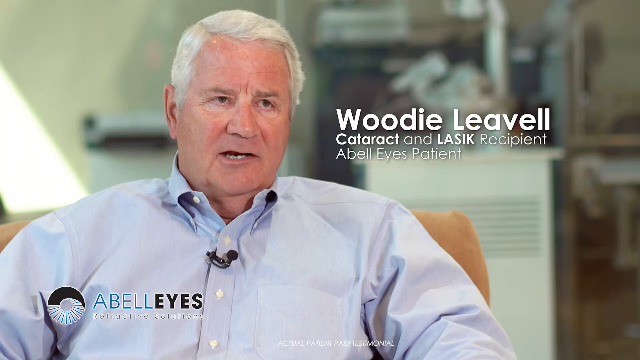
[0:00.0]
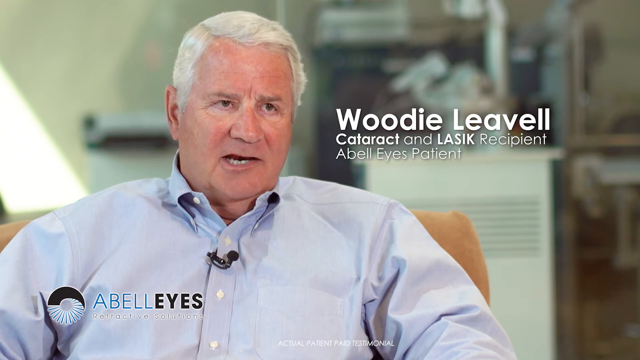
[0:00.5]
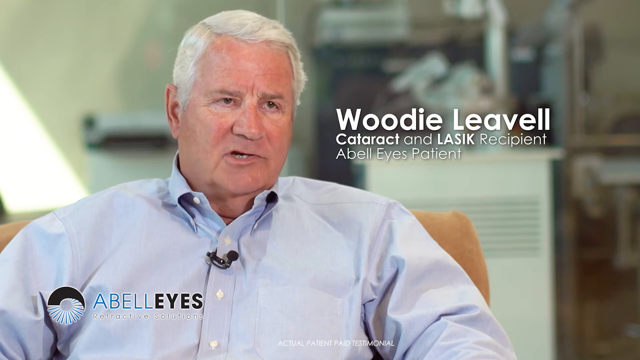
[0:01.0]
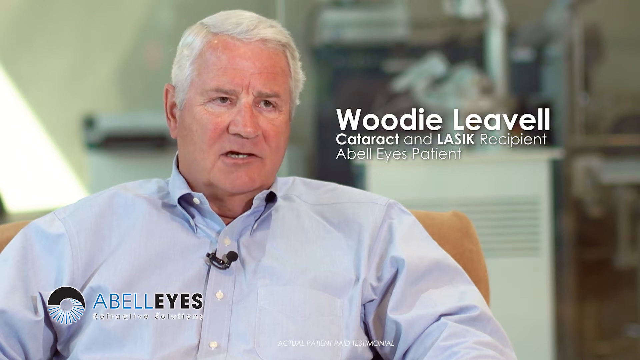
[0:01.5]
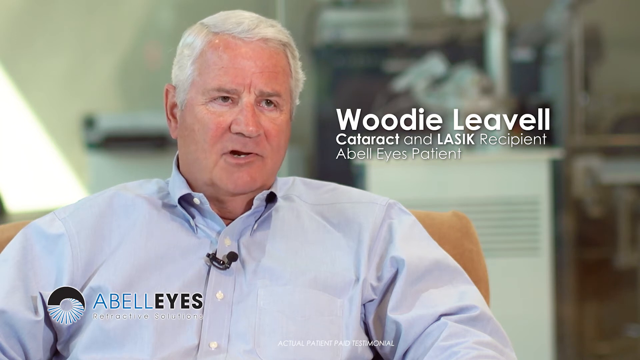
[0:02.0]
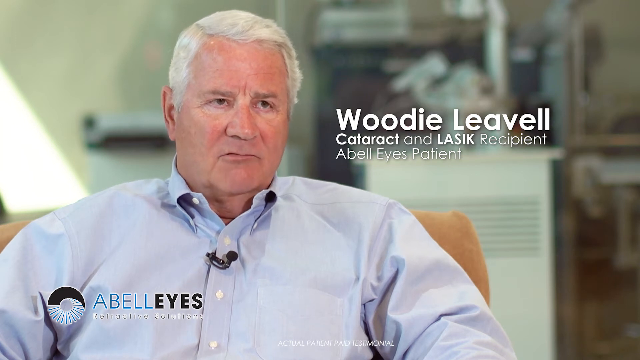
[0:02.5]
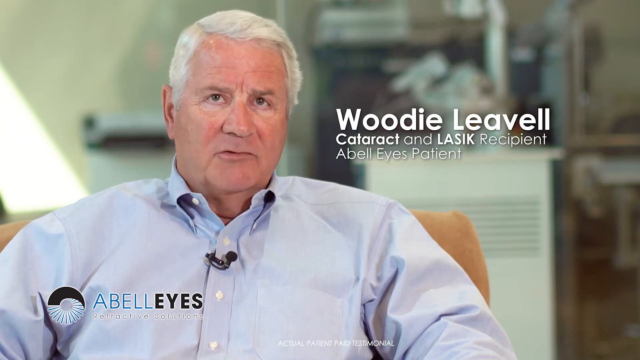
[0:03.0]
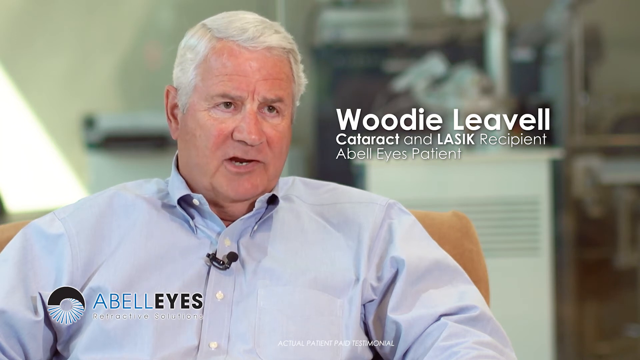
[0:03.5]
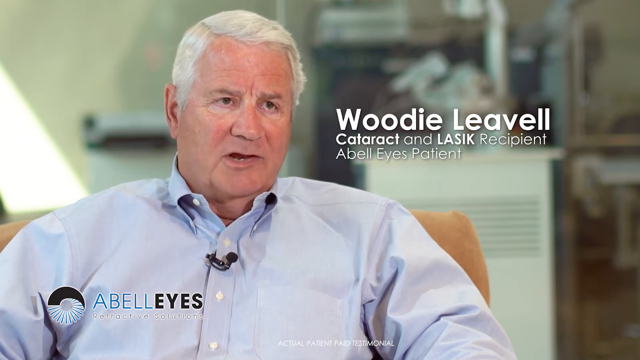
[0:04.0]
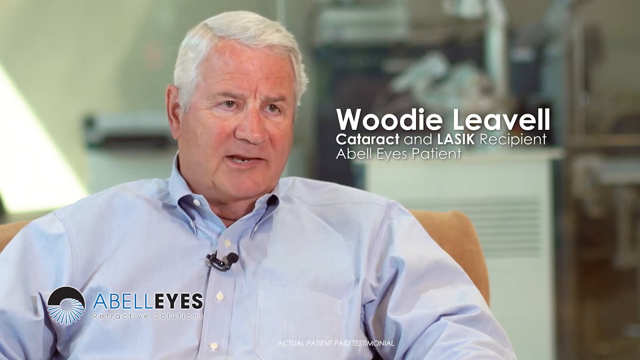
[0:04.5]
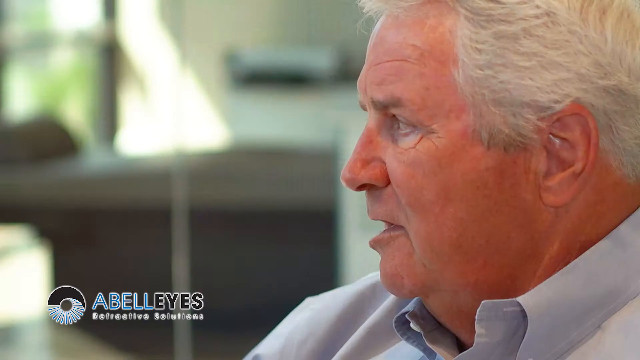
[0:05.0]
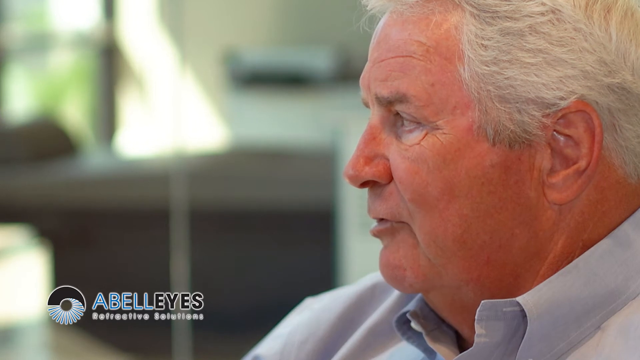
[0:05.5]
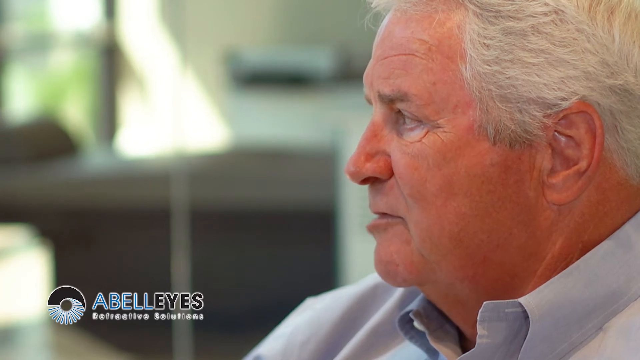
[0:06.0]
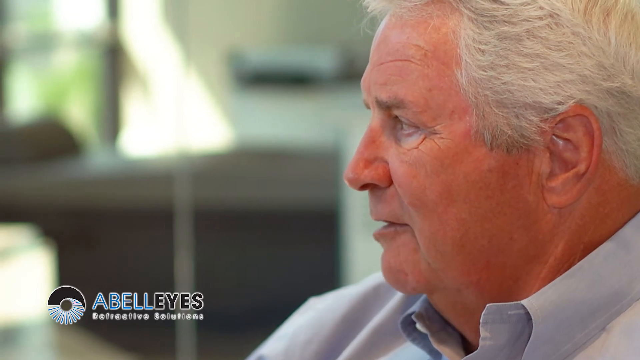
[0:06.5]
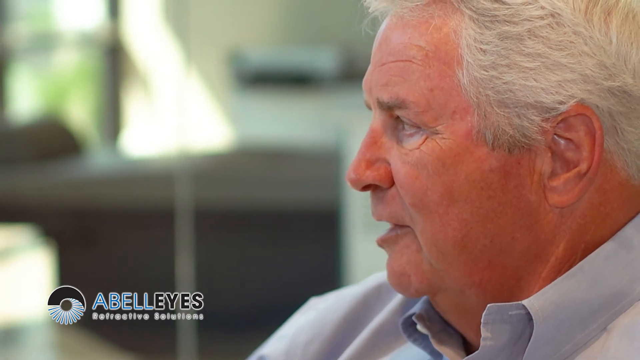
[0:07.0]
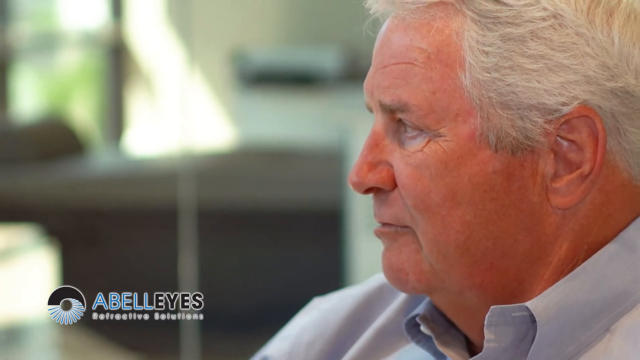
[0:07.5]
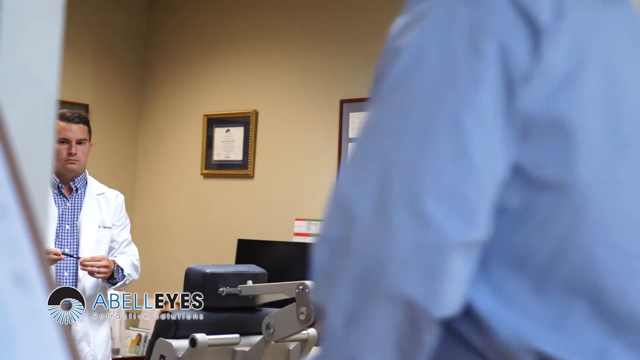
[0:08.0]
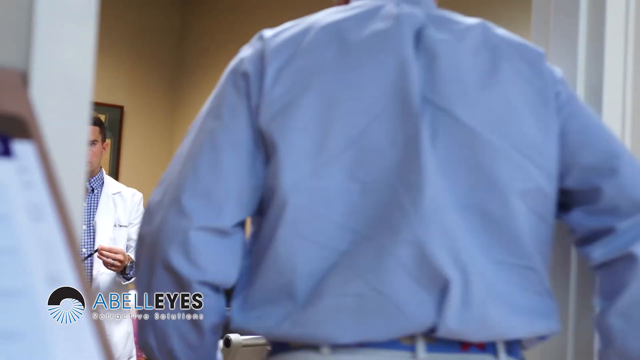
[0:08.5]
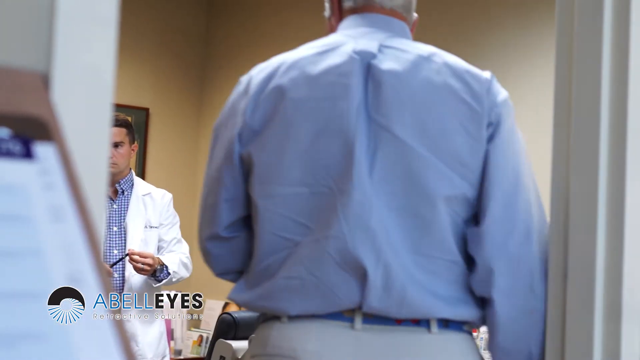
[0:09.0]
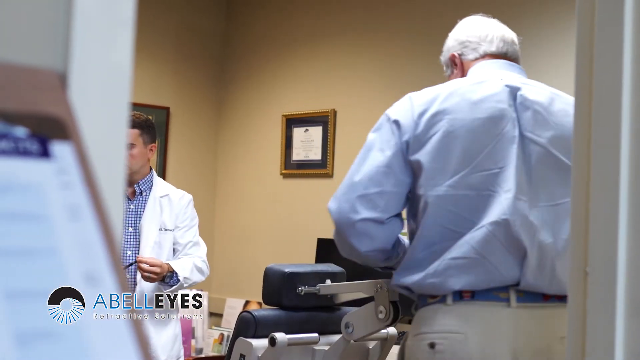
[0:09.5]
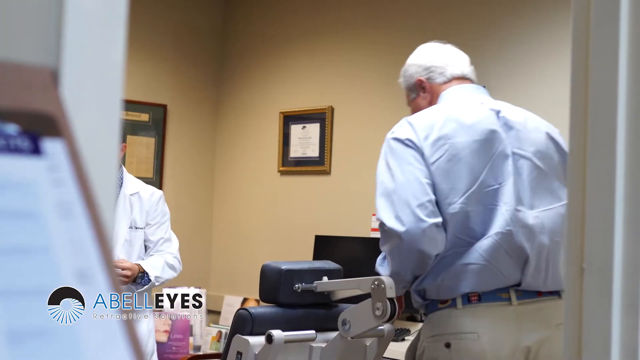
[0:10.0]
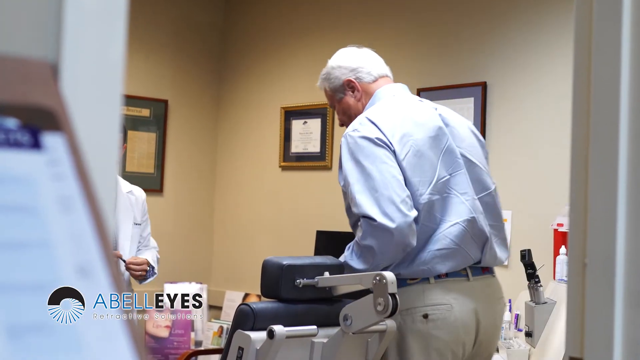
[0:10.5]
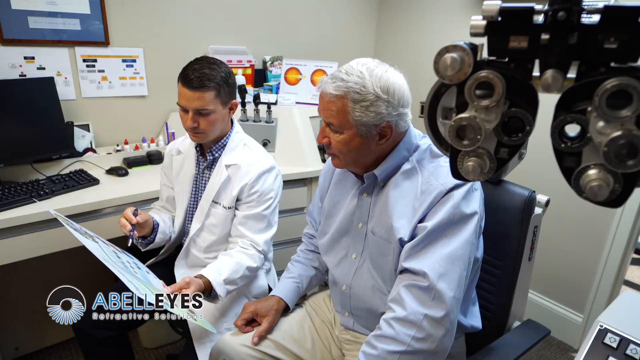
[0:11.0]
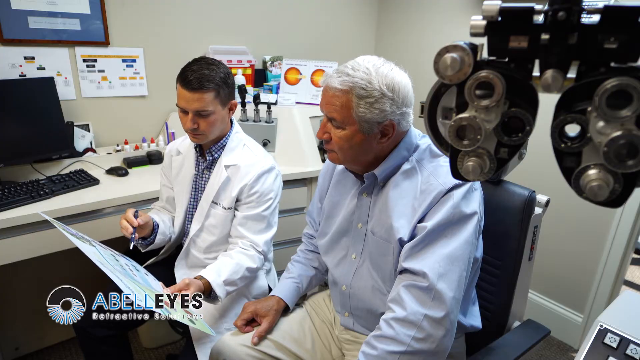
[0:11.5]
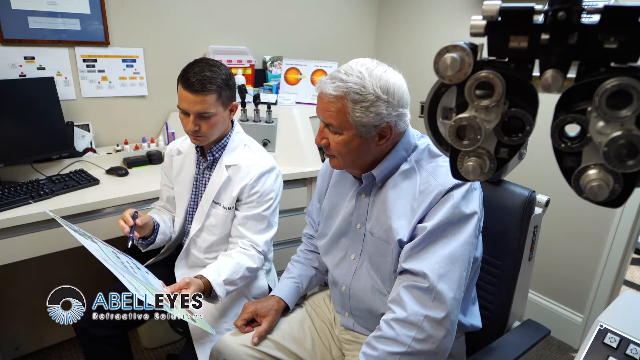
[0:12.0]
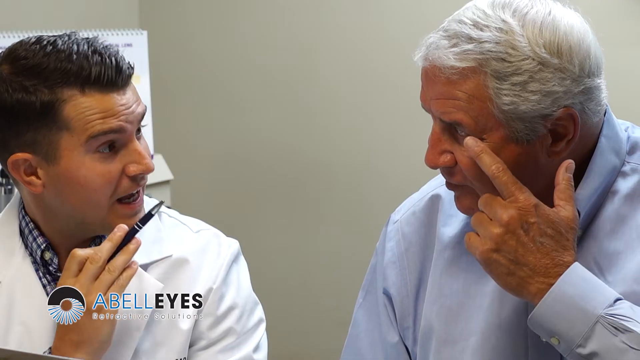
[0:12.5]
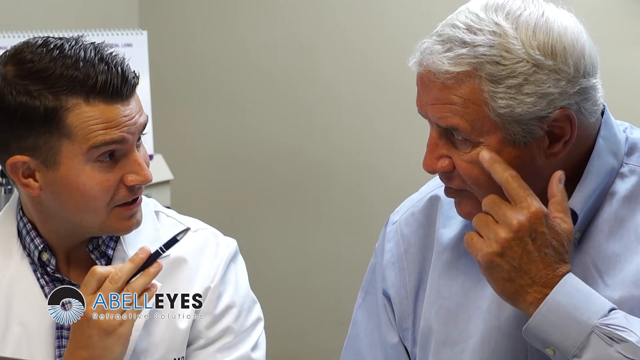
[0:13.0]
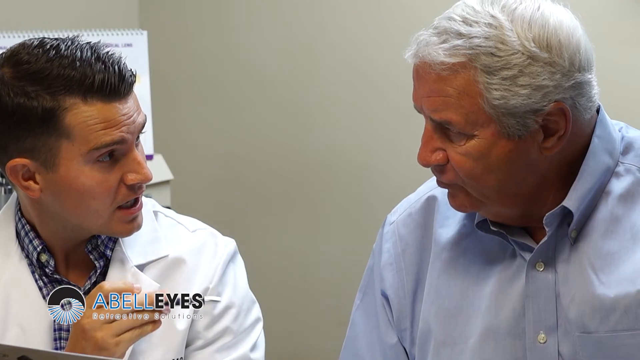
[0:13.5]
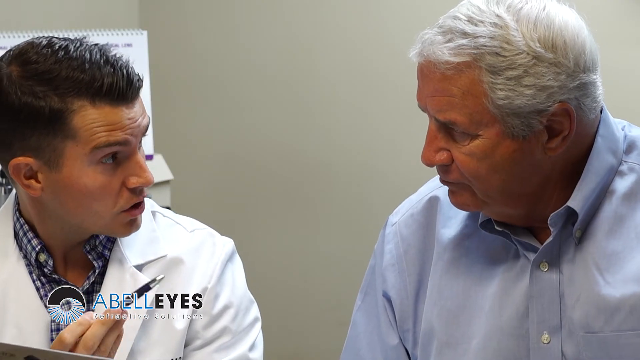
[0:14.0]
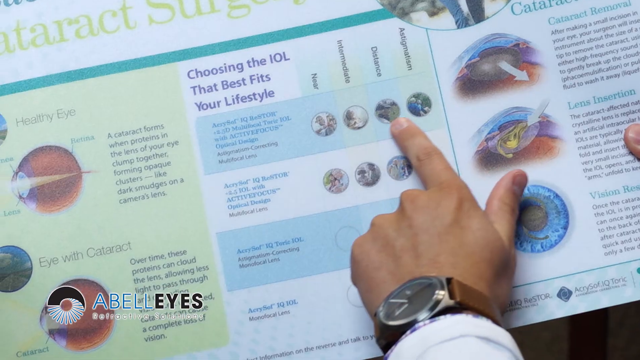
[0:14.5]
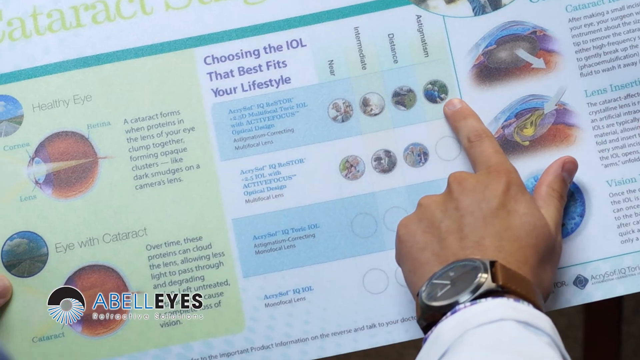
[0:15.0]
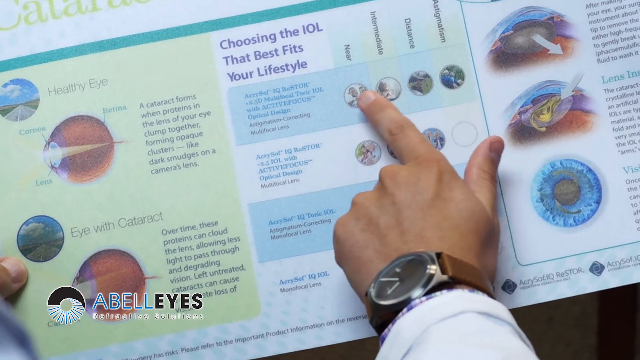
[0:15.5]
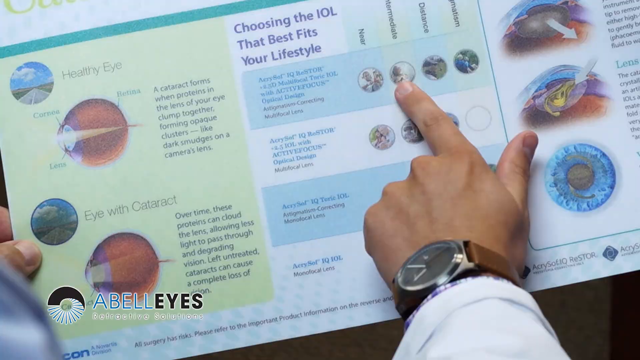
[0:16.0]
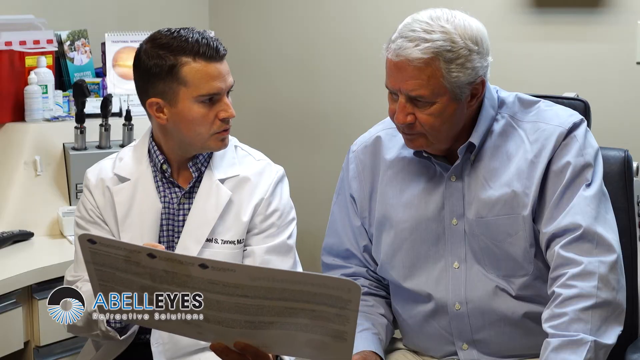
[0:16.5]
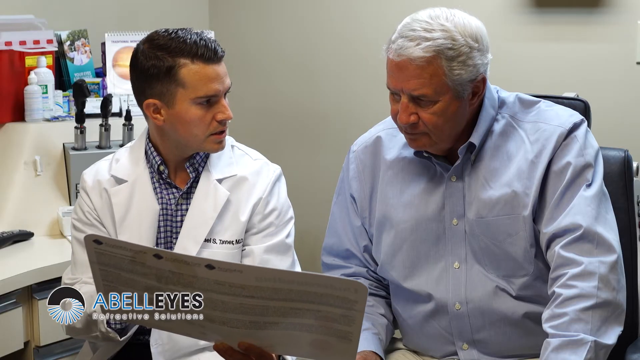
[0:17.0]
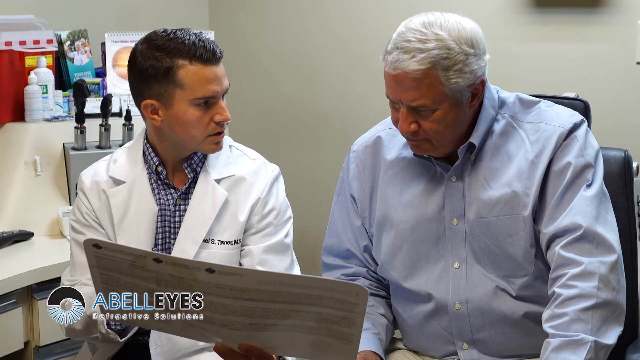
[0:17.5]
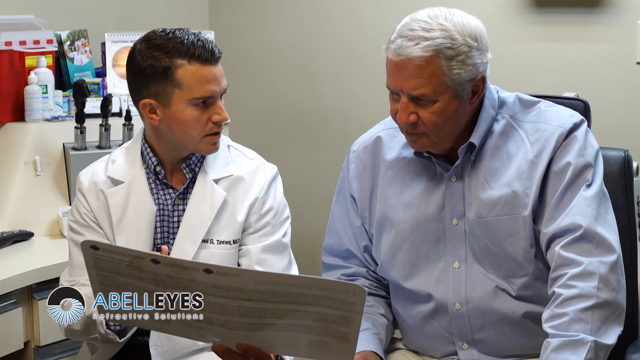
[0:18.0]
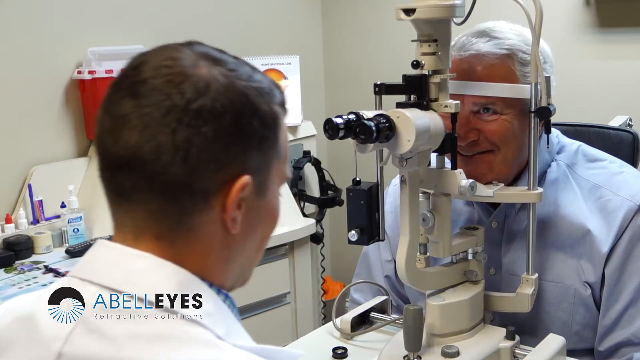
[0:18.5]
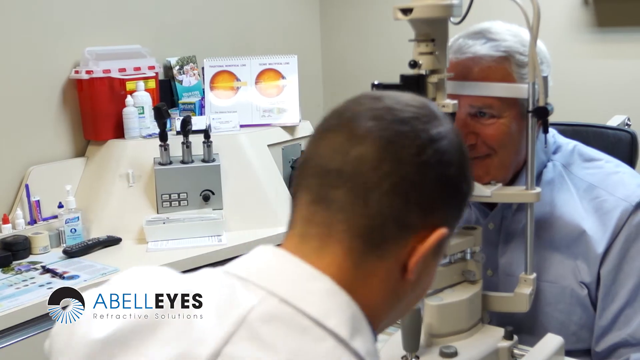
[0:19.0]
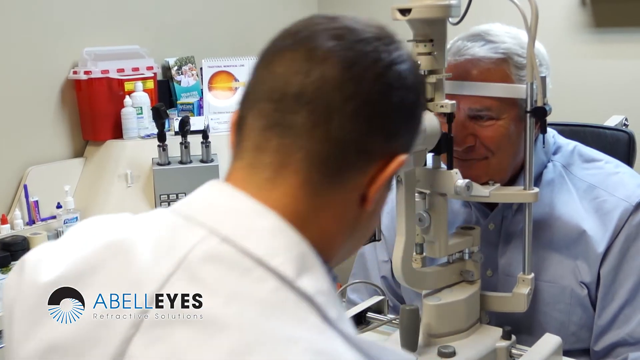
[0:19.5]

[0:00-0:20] An older gentleman sits wearing a light blue button-down shirt with white buttons. In the left-hand corner, text that may be the name of the company behind the video reads "ABELL" in blue followed by "eyes" in bold black. On the right side, next to the man's face, text reads "Woodie Leavell," and underneath that "cataract and LASIK recipient" and "ABELL eyes patient." He is talking, his mouth moving, and a small mic is attached to his shirt. He then walks into an office where the doctor, who looks very young, is explaining something. Text reads "choosing the IOL that best fits." The man looks into equipment that checks his eyes.